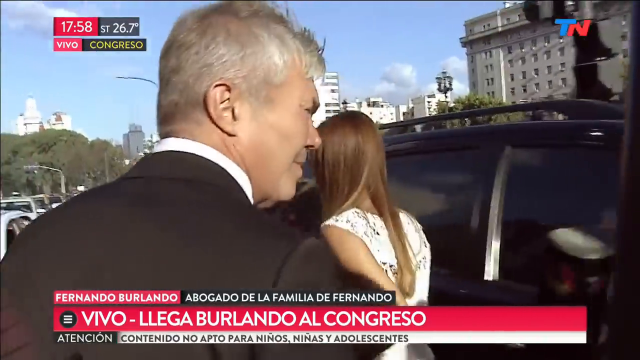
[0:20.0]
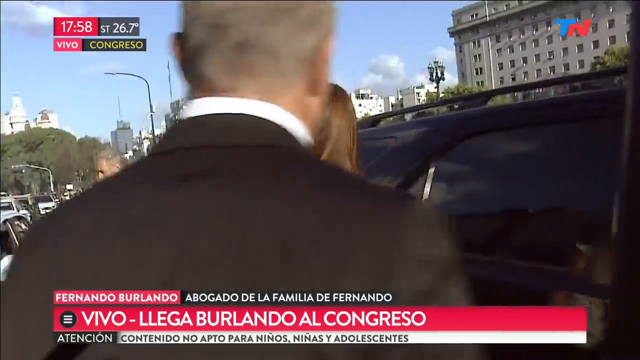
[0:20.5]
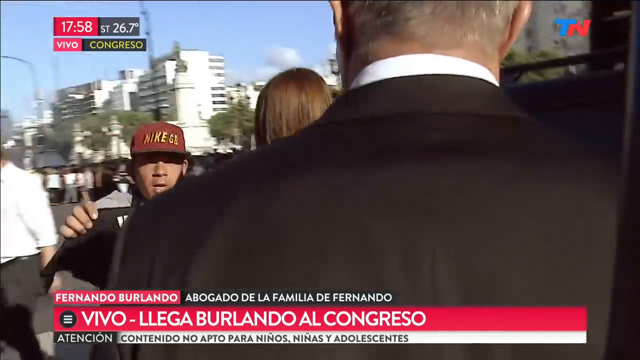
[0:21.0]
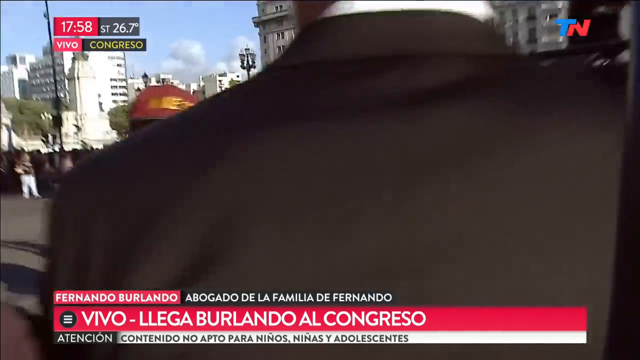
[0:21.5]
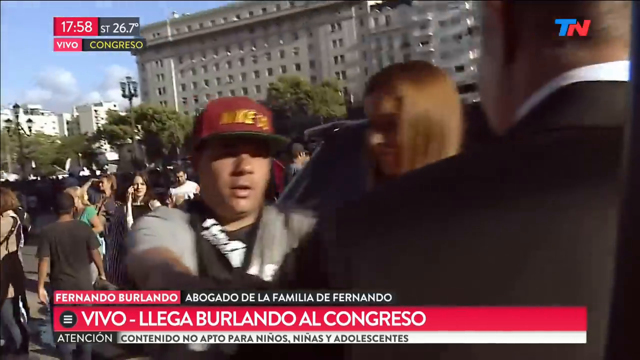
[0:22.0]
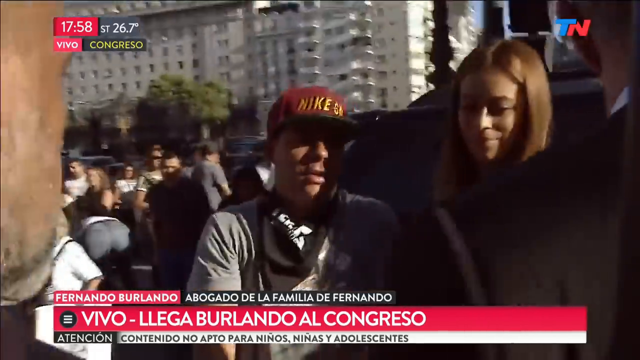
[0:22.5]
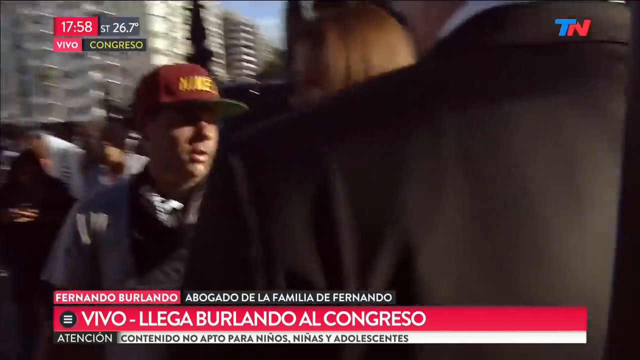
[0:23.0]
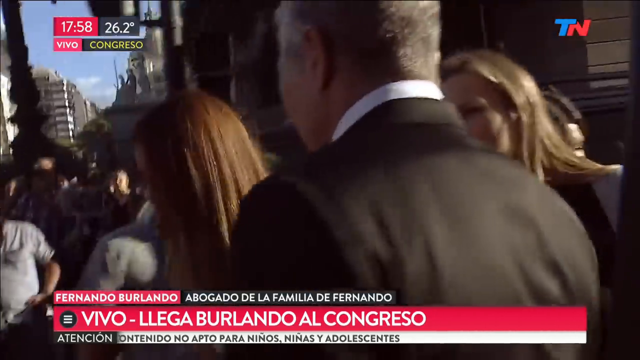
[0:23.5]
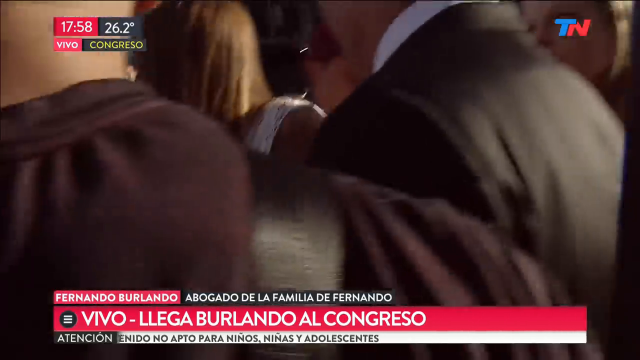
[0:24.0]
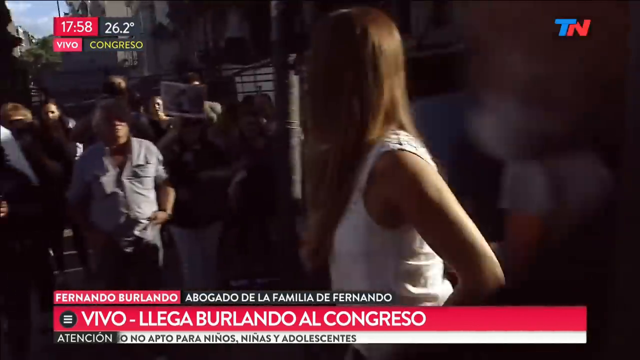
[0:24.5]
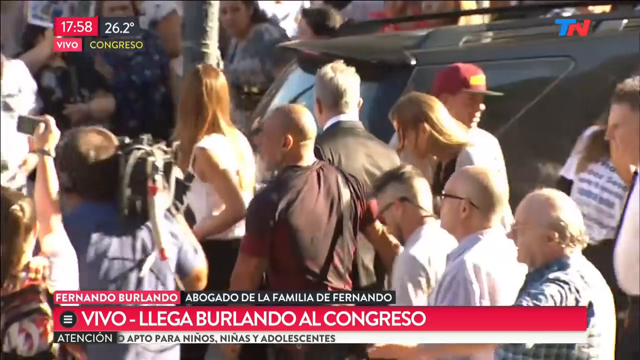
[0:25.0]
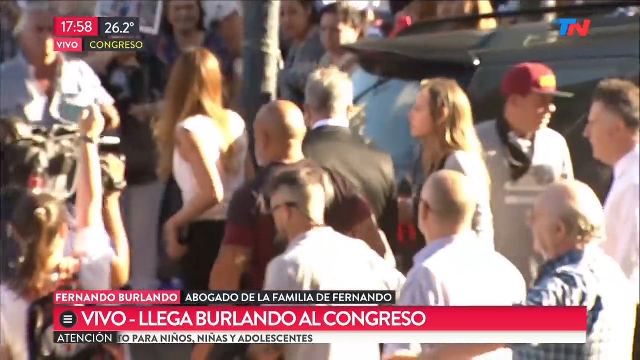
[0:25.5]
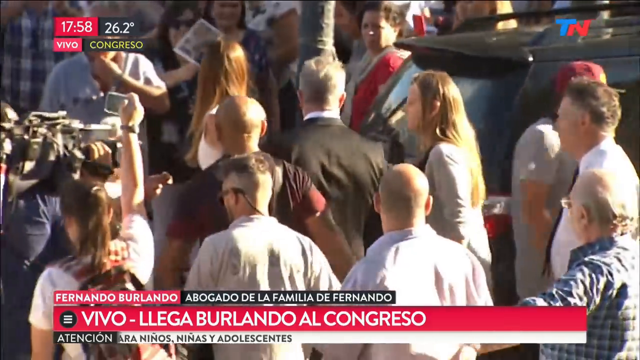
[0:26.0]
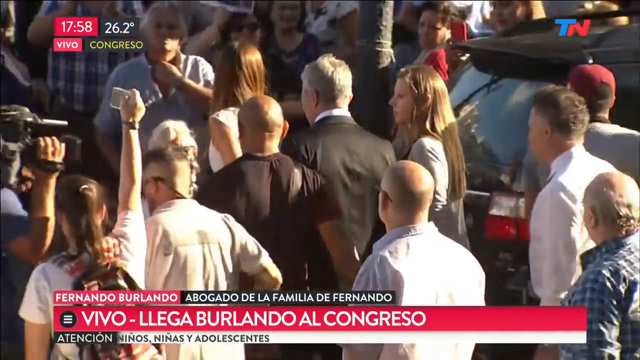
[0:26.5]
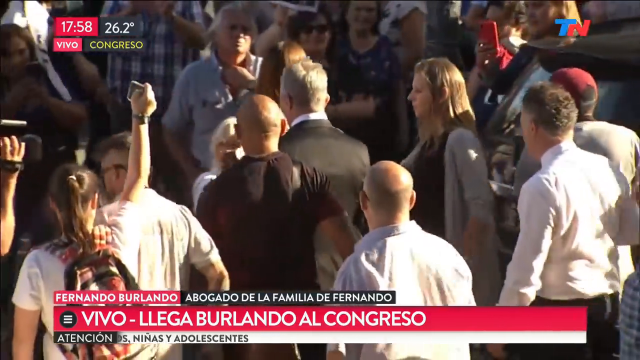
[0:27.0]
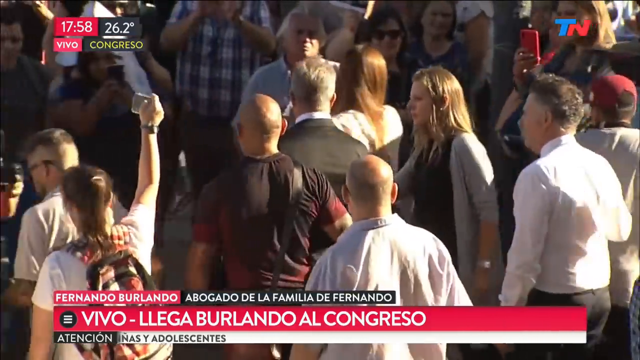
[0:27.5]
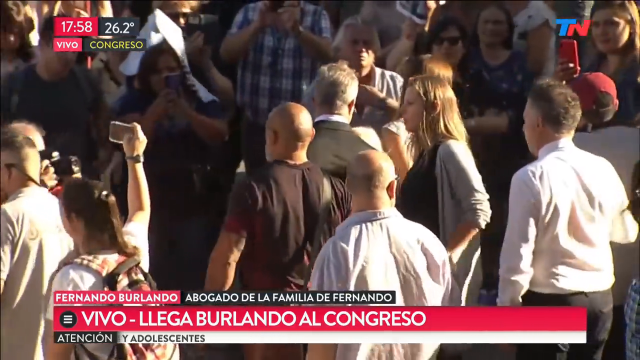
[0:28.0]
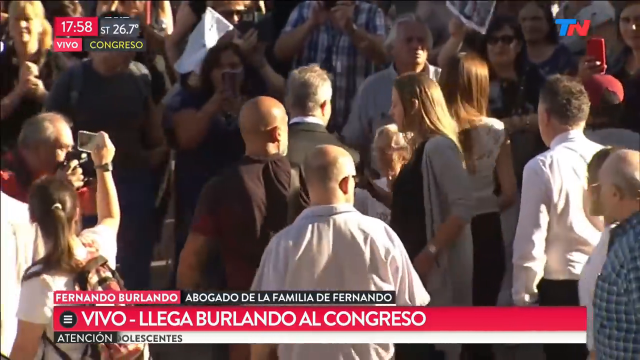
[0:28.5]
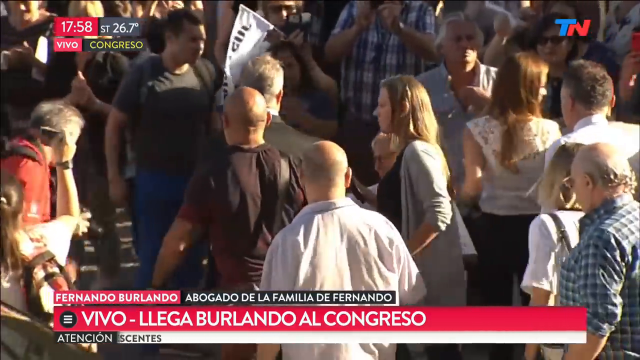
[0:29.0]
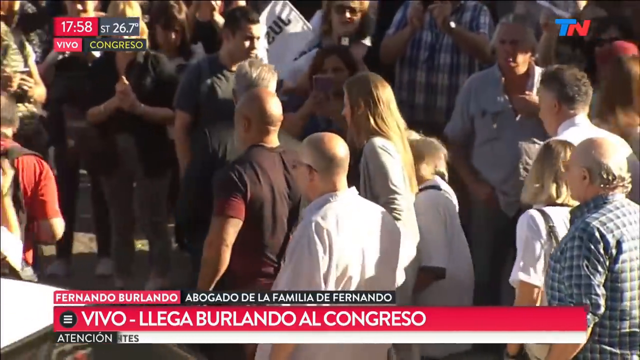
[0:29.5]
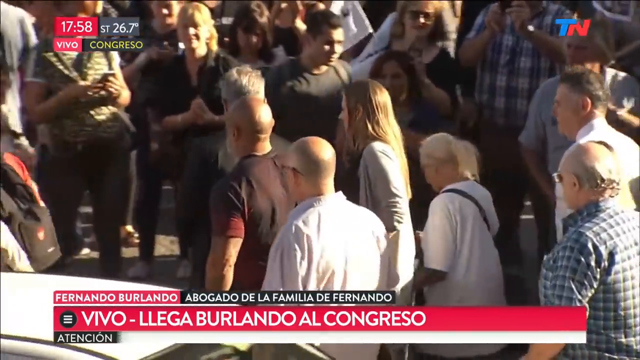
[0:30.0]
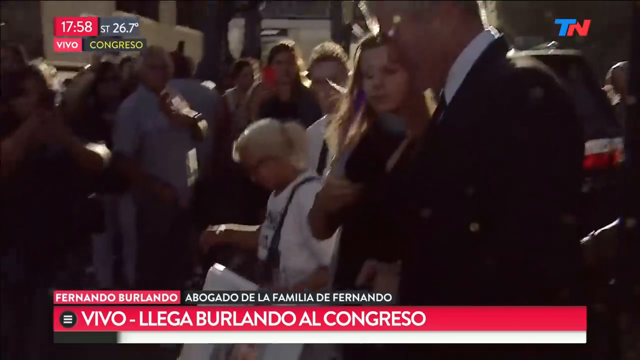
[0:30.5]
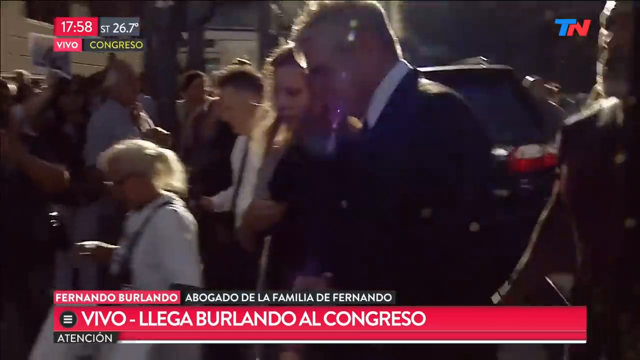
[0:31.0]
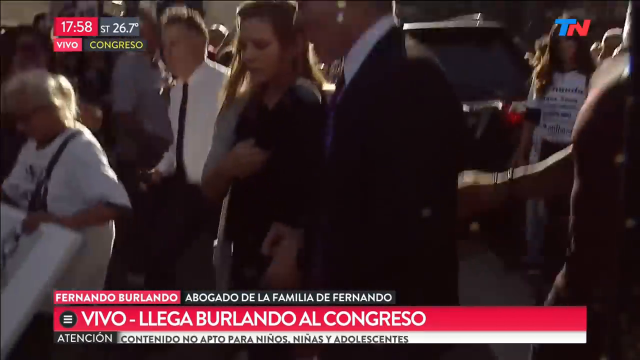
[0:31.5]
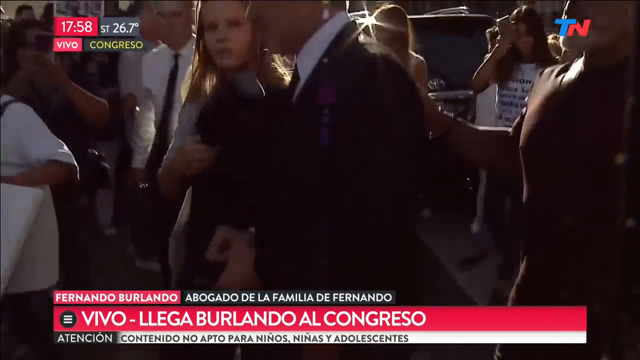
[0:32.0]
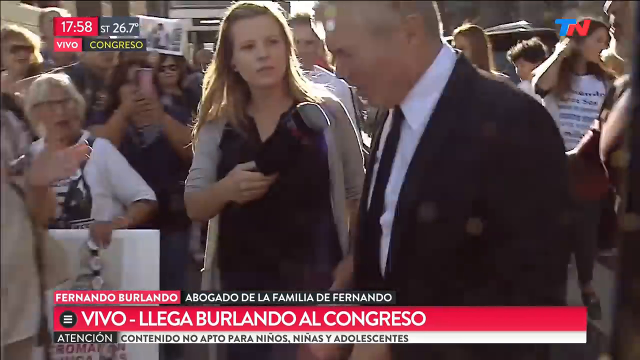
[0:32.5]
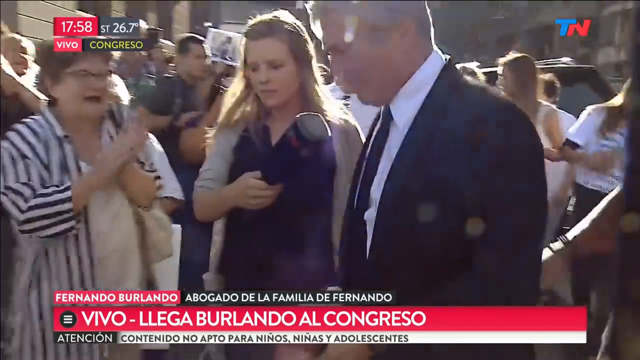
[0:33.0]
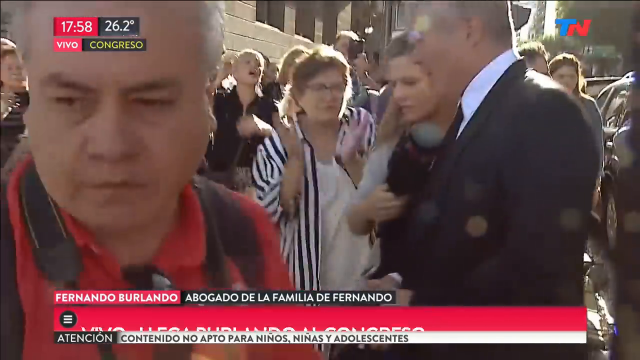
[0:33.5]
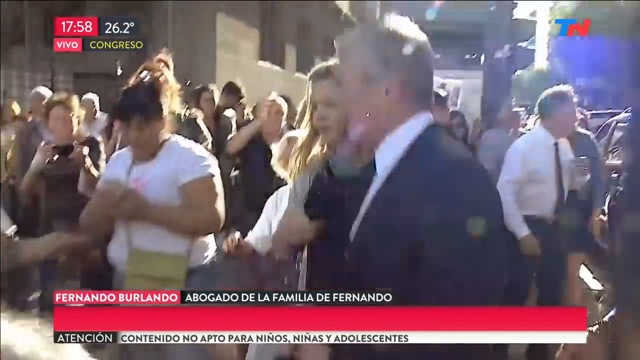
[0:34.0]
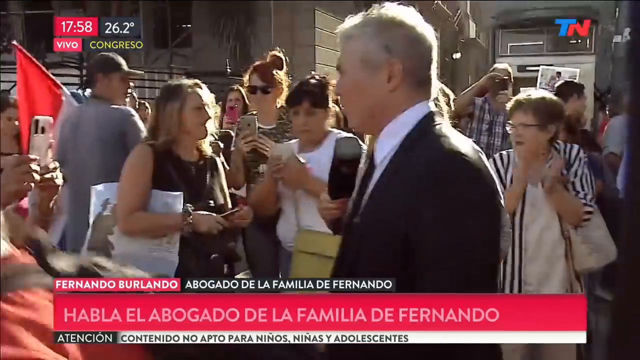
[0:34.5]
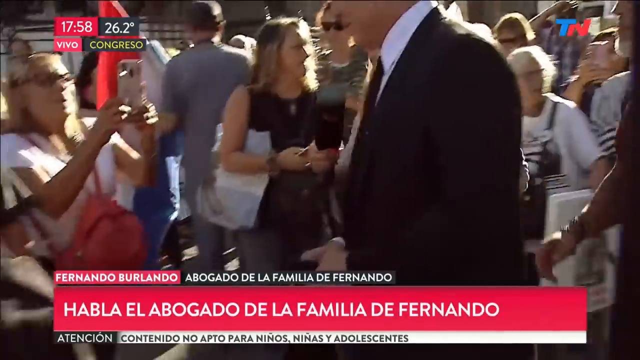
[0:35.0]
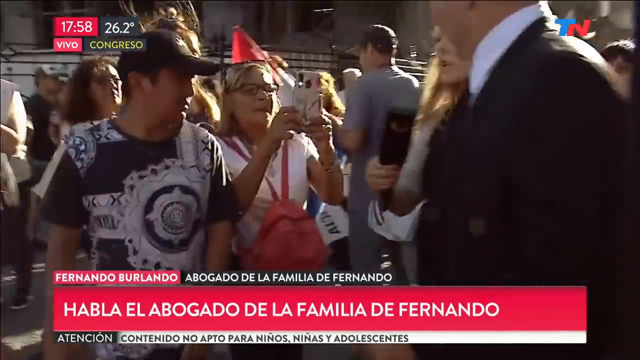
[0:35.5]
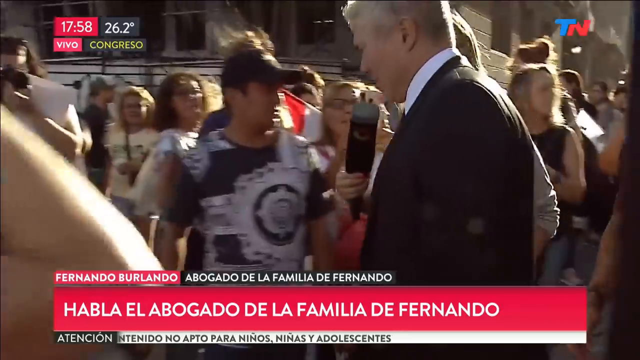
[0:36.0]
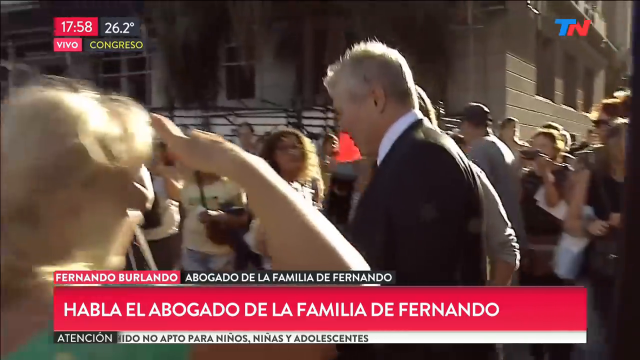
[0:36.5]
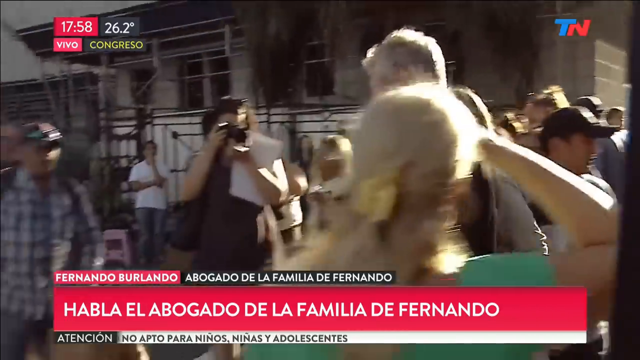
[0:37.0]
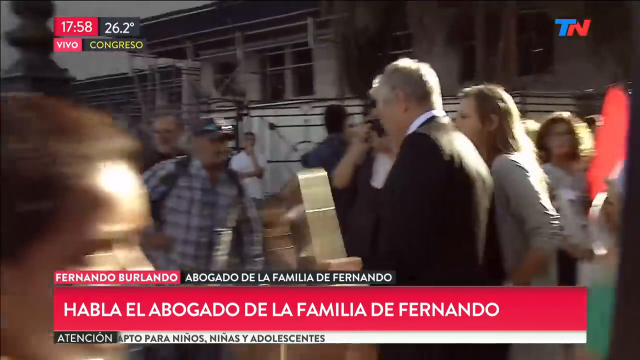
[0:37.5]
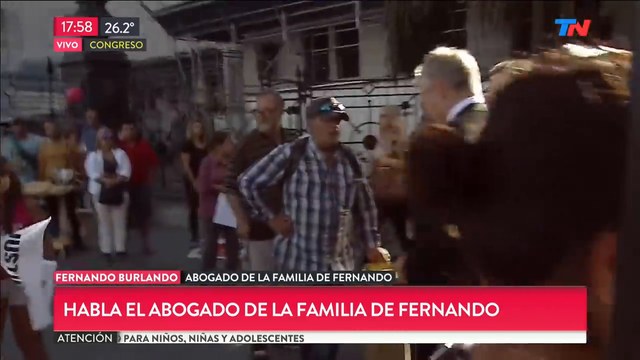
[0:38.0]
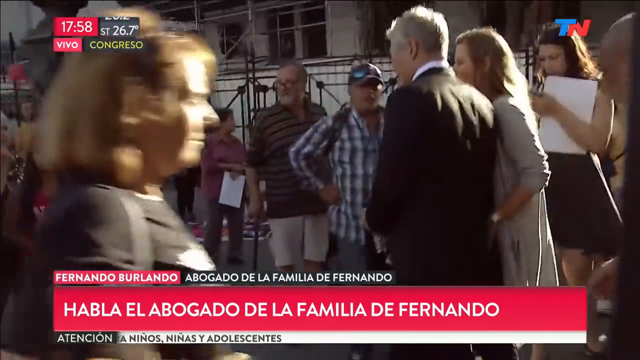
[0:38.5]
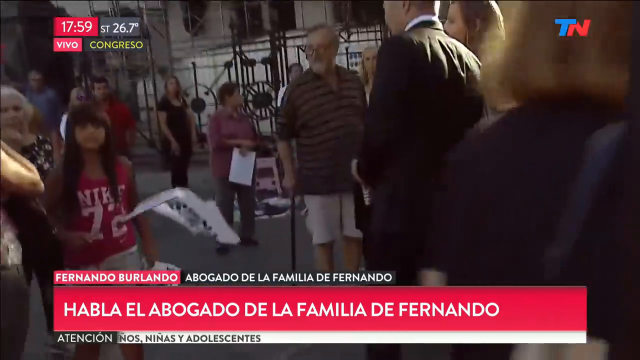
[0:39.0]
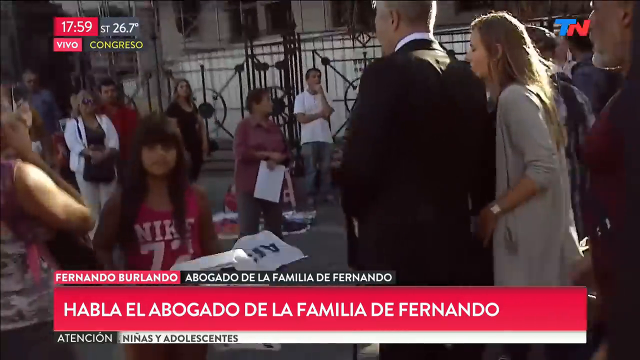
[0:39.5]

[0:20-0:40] A man in a black suit and white shirt walks away from the camera toward a crowd of people in front of him. Many people have cameras and try to speak with him, and some clap, but he keeps walking through the crowd, accompanied by what appear to be bodyguards. An overhead shot of the crowd follows, and then the camera again follows the man from behind as he makes his way through the crowd toward what looks like a building. The crowd is so thick that nothing else is visible in the background. Text on the image reads "HABLA EL ABOGADO DE LA FAMILIA DE FERNANDO".